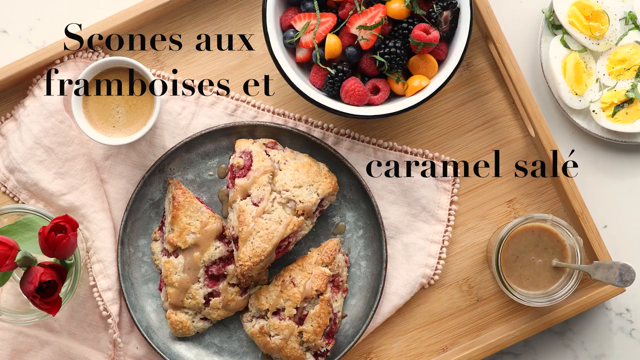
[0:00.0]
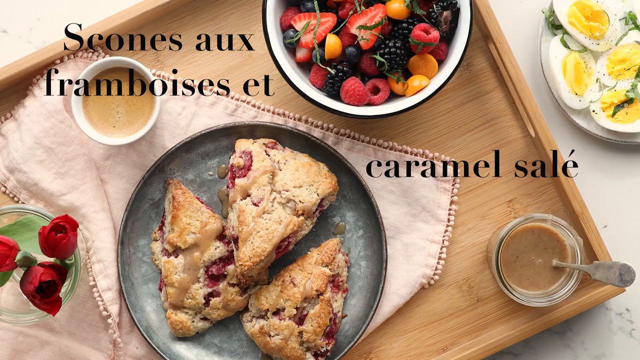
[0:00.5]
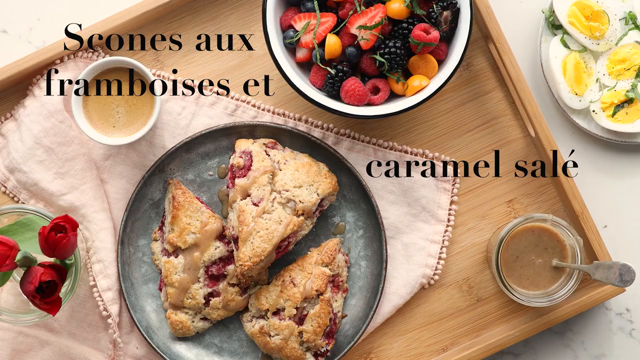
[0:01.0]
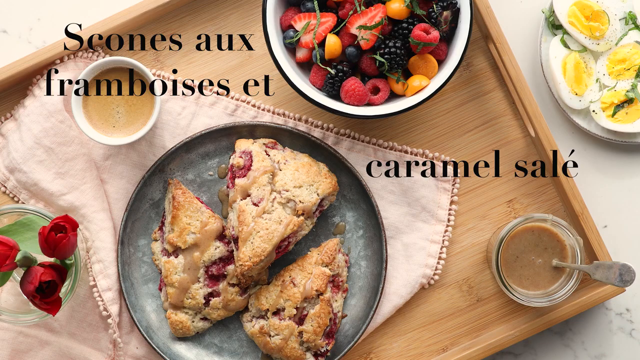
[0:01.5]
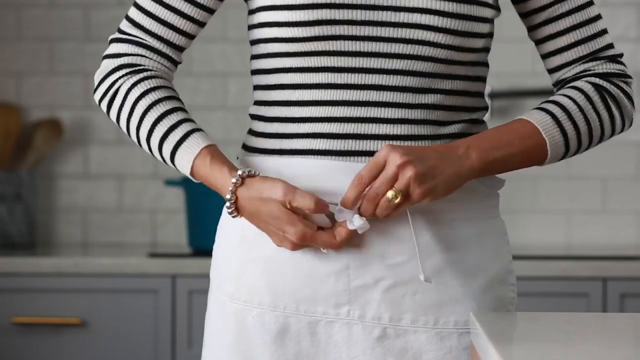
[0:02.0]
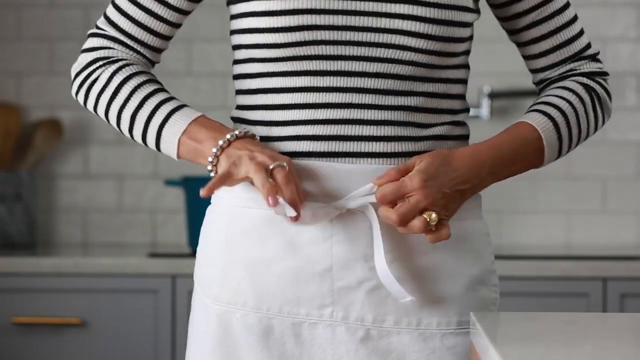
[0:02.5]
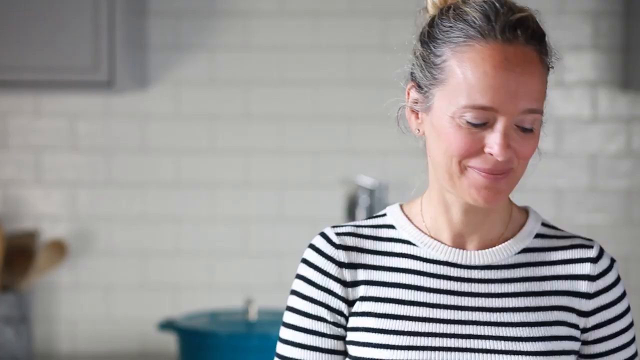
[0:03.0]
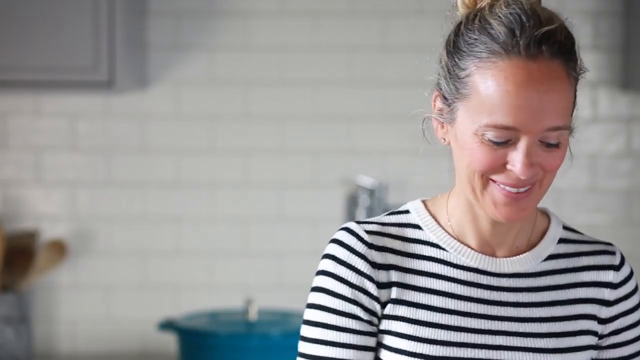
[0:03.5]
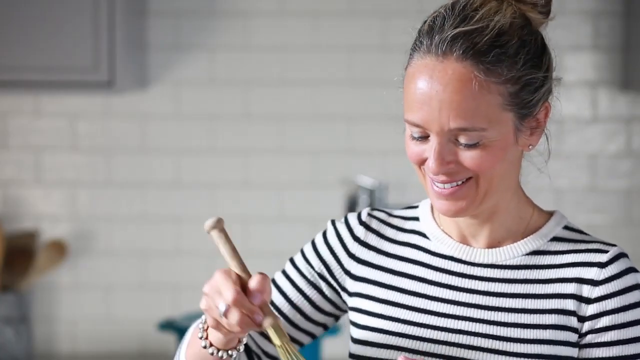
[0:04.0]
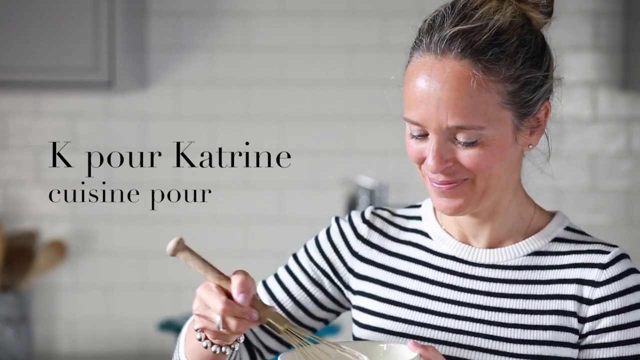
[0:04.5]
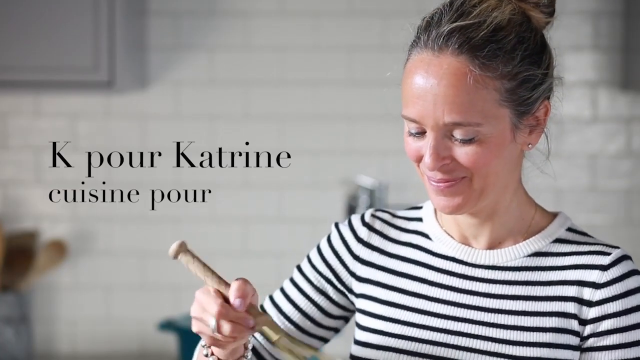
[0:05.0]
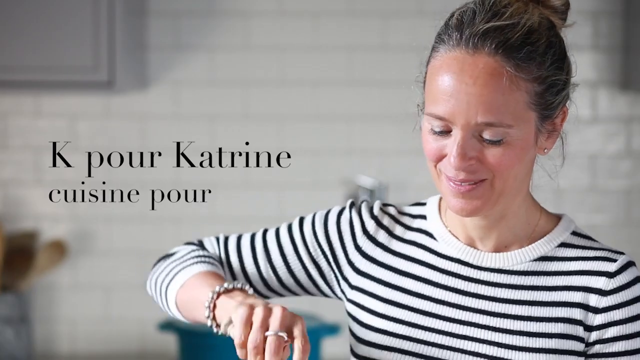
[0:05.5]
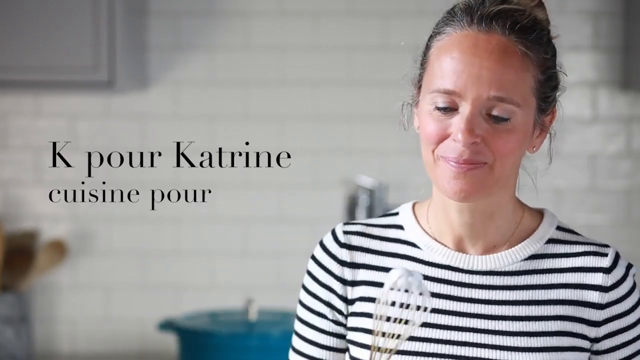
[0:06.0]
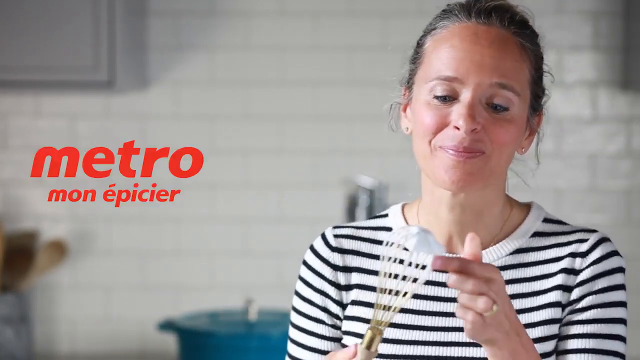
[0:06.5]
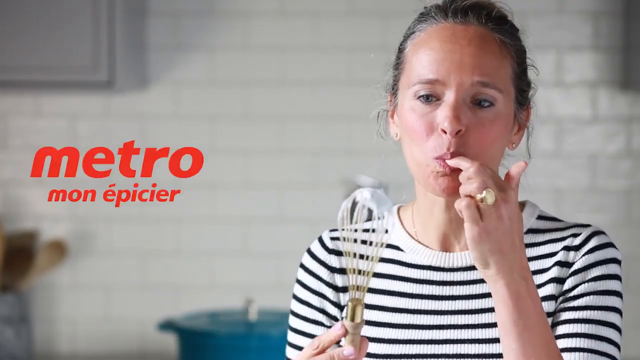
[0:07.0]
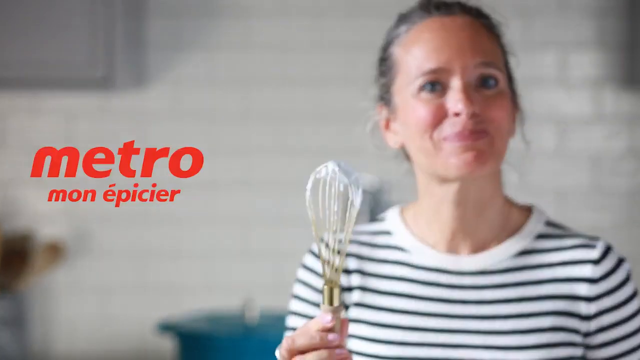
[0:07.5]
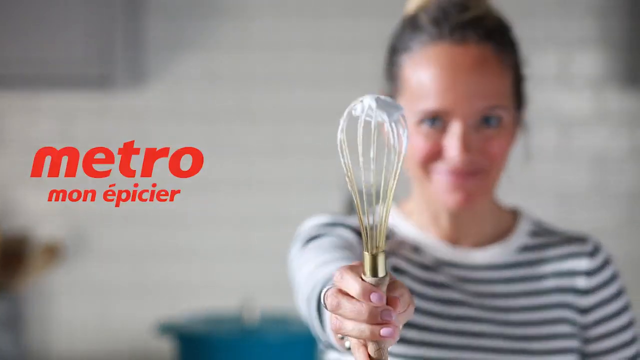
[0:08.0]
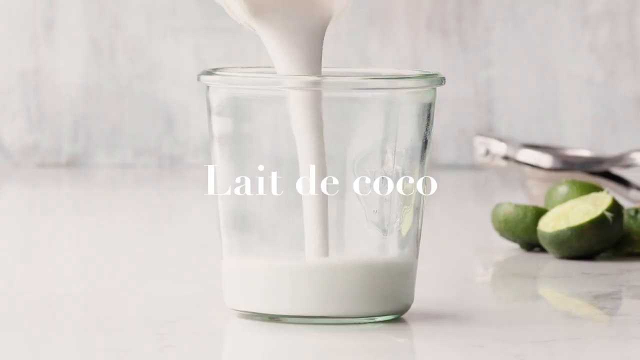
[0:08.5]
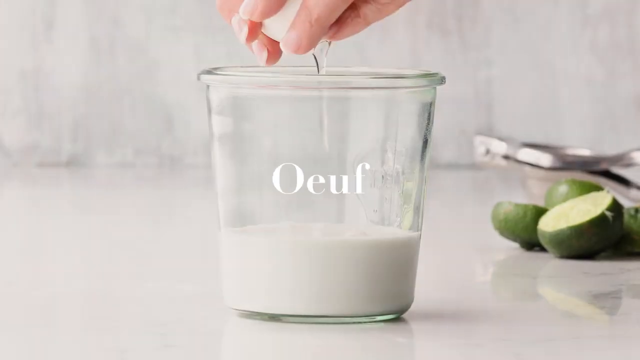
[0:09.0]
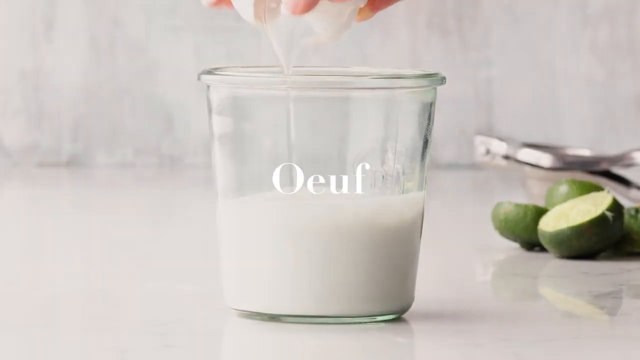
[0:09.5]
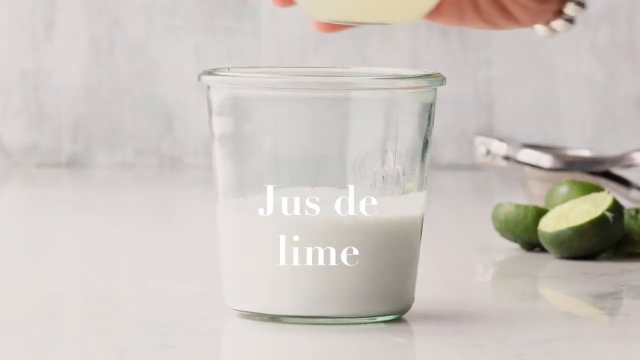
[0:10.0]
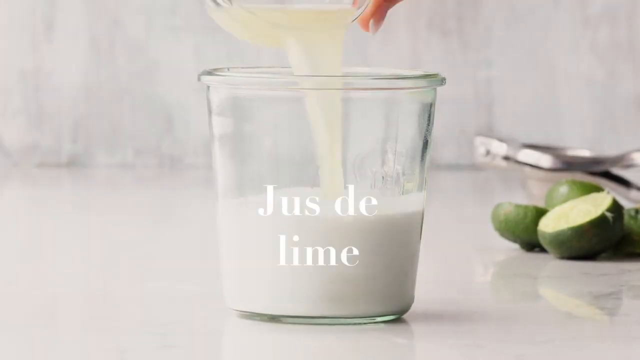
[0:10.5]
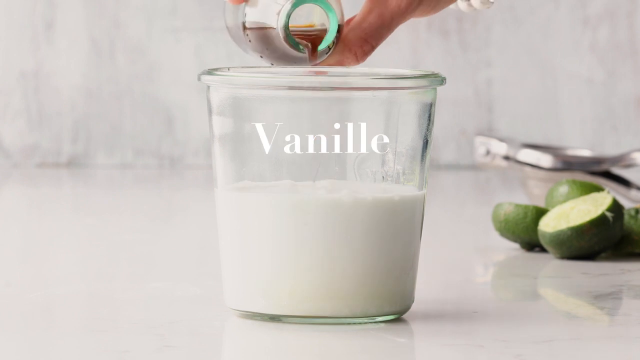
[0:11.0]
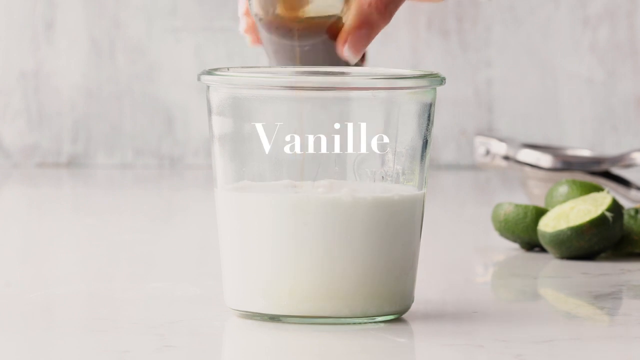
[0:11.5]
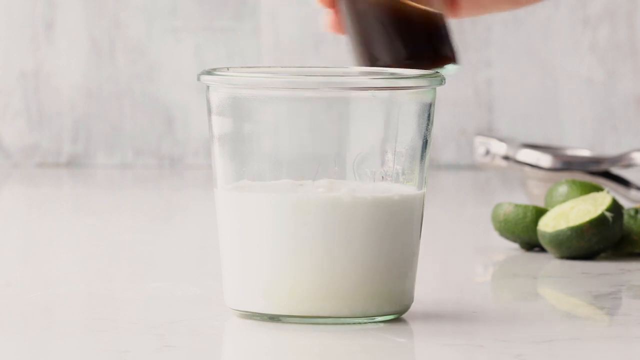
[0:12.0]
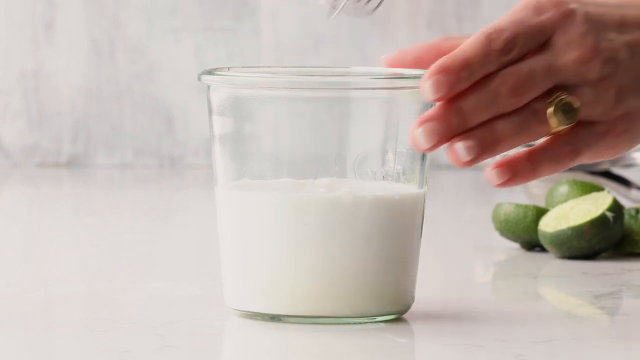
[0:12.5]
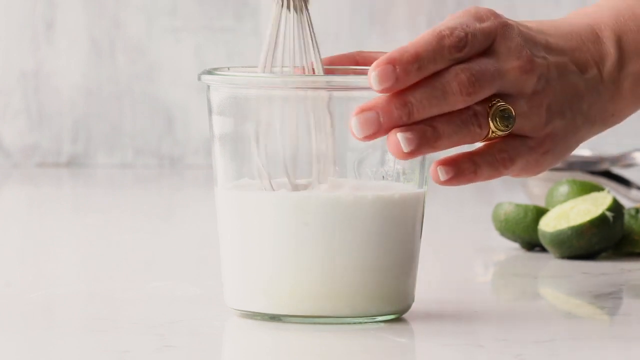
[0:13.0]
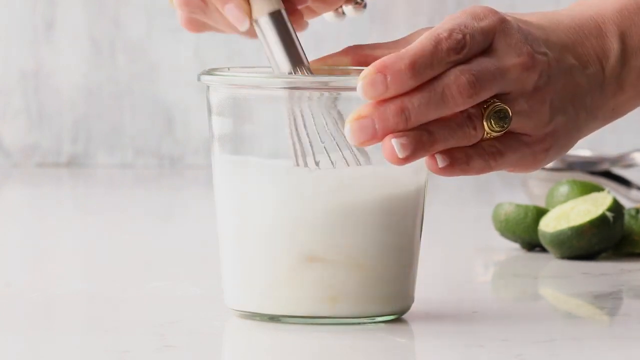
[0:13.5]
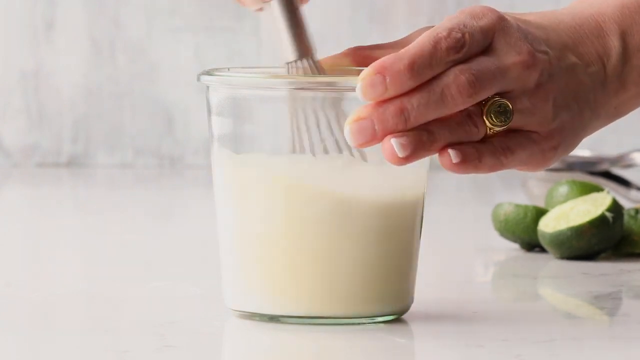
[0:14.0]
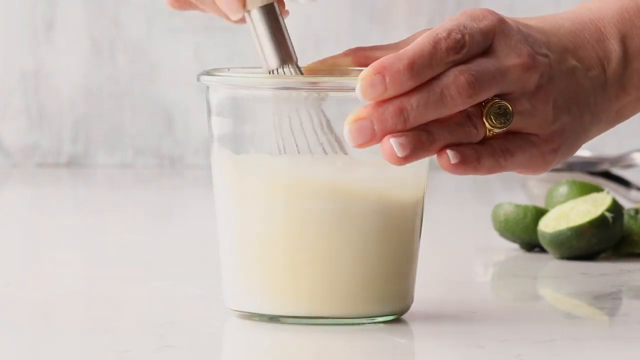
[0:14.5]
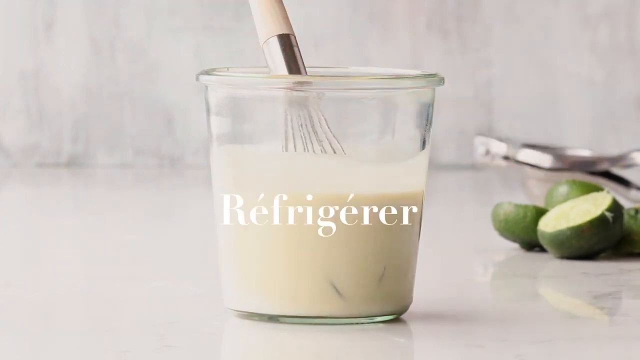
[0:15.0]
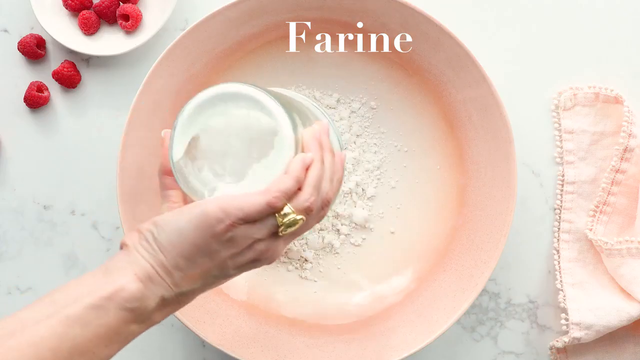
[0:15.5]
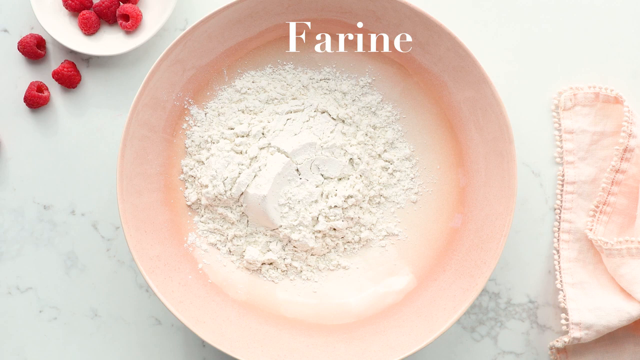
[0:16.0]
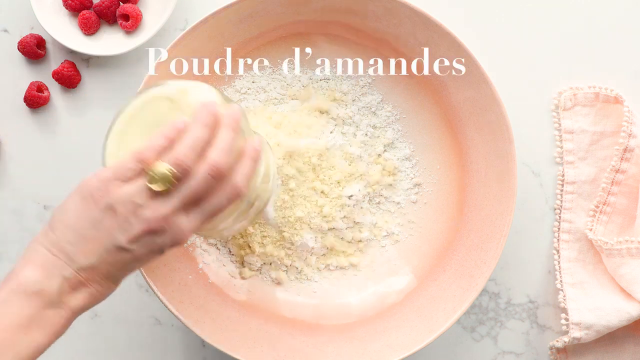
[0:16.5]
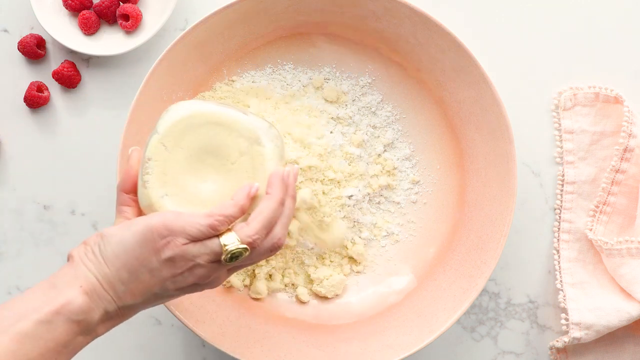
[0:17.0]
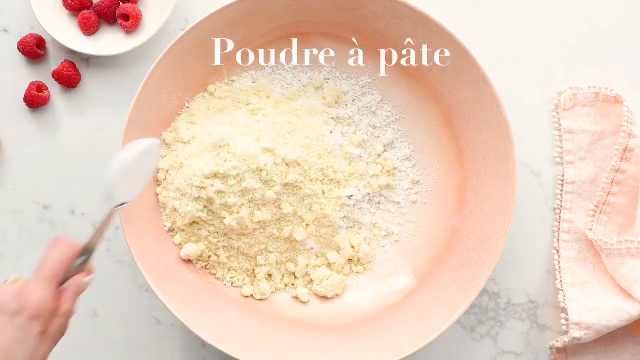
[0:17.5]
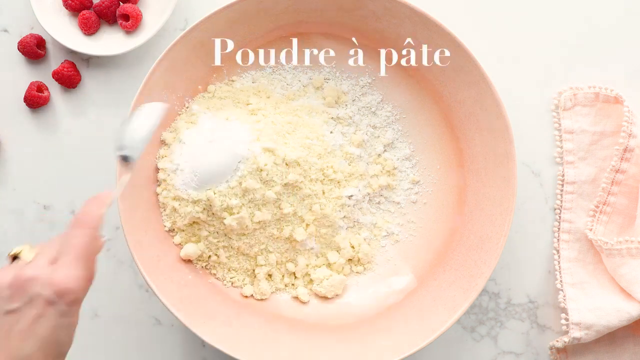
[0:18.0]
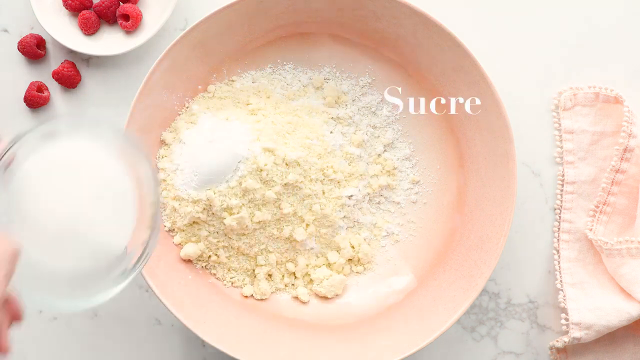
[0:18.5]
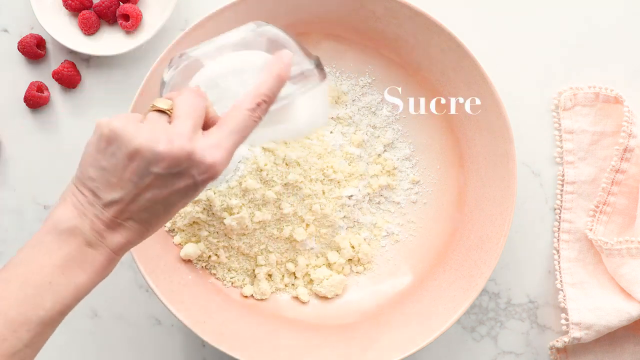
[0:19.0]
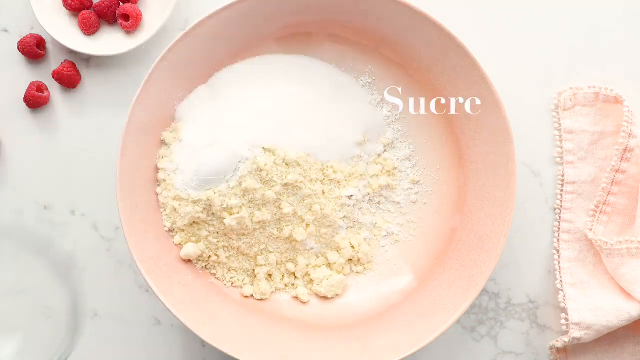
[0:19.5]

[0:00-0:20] The video opens with a still shot of a tray holding a piece of baking, a cup of tea or coffee, and a bowl of fruit. French text on top appears to read "Scones au tramboises et caramel sale", and the video appears to be introducing a recipe for some type of tart. A shot then shows a woman's torso as she ties an apron around her waist; her head cannot be seen. She wears a black and white striped jumper, rings on each hand, and a bracelet on her right hand. The action seems very fast, as if sped up. Next her face is shown: she is smiling, white, with blonde hair tied back. She picks up an instrument and begins to whisk something unseen below the bottom of the screen, while the text "K pour Katrine? Cuisine pour" appears on screen. The action is heavily sped up. She brings up the whisk and uses her finger to take some of the white liquid off the top of it and taste it. Meanwhile, red text appears on the screen reading "Metro mon épicier". She then pours a series of ingredients into a bowl, including eggs.